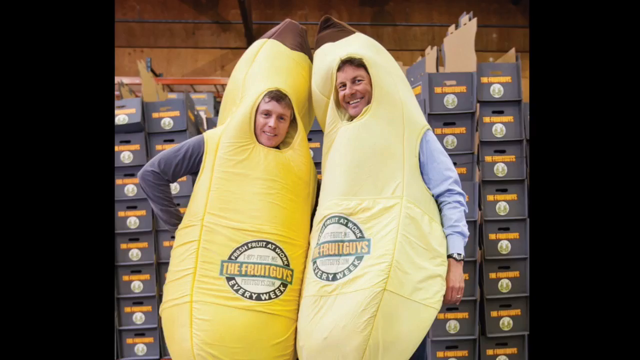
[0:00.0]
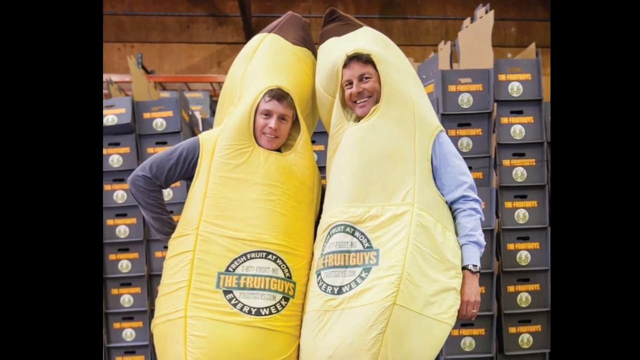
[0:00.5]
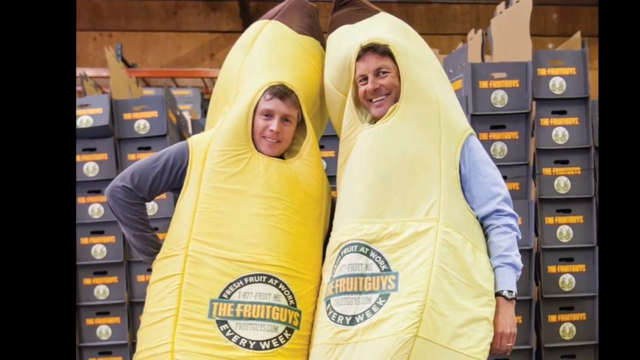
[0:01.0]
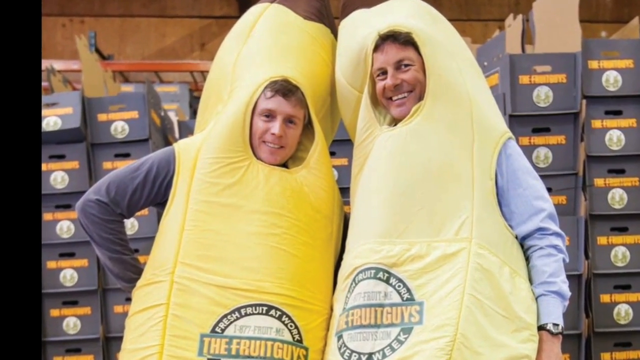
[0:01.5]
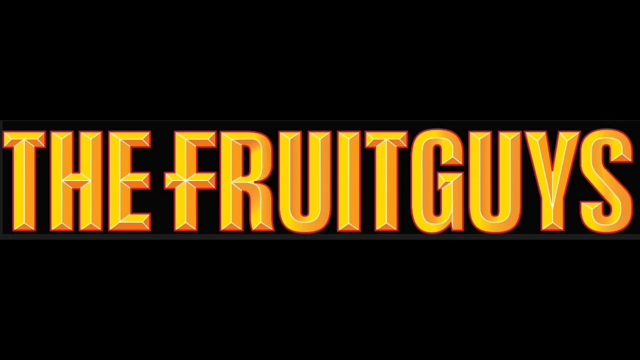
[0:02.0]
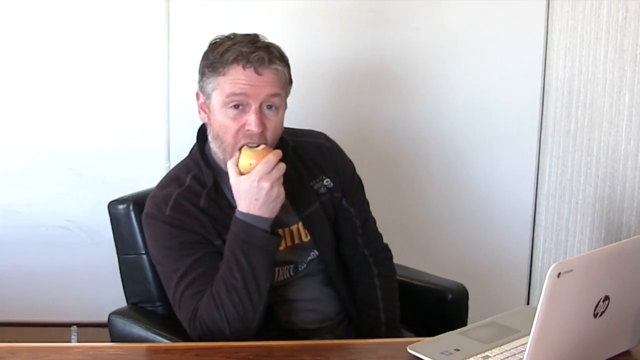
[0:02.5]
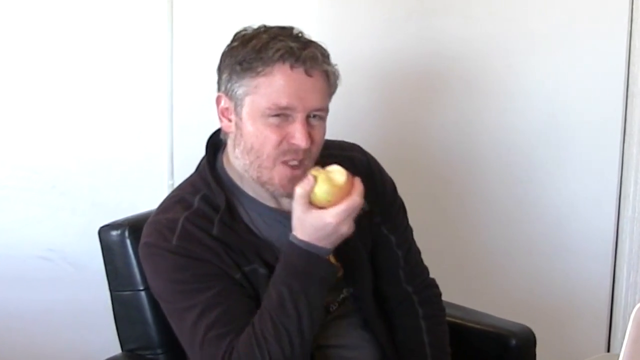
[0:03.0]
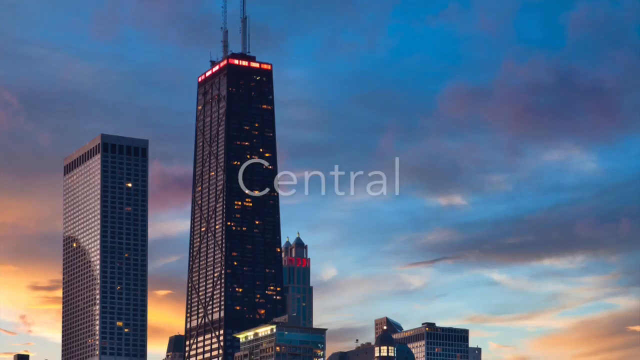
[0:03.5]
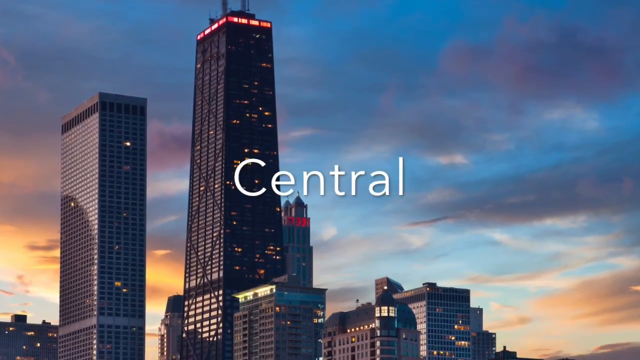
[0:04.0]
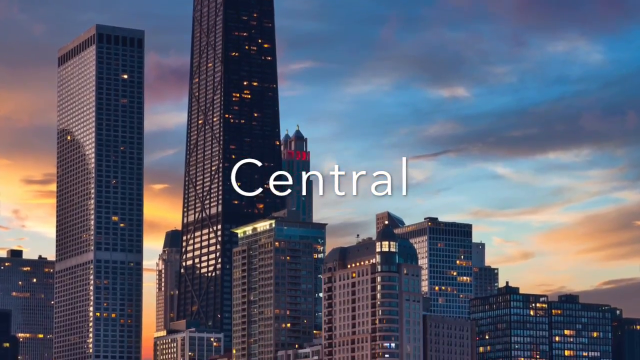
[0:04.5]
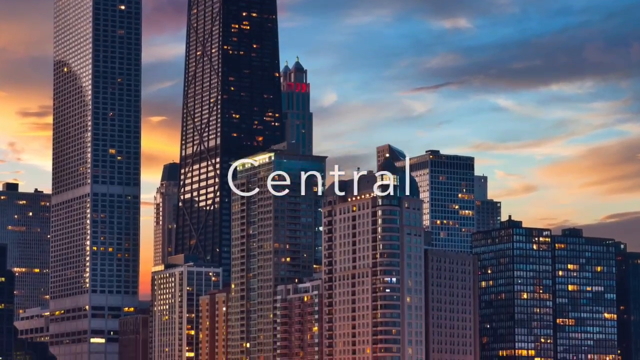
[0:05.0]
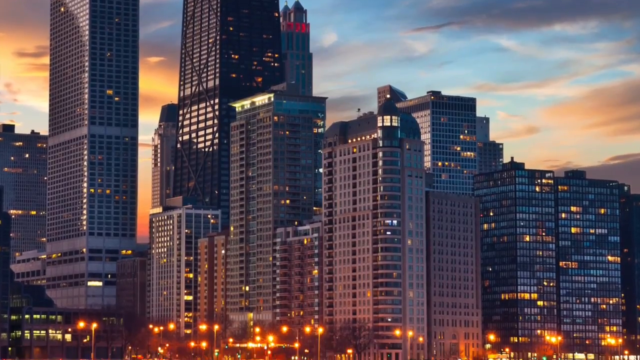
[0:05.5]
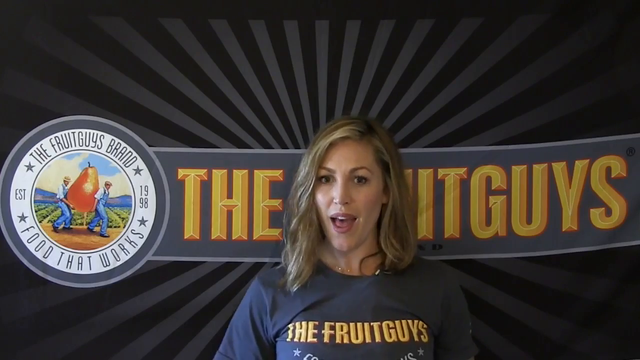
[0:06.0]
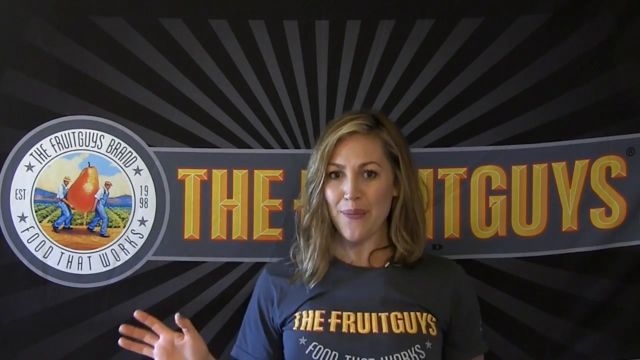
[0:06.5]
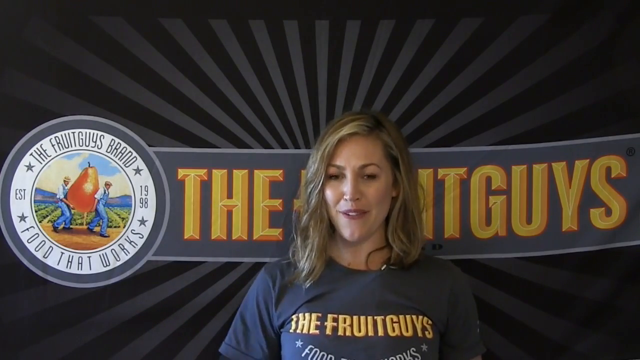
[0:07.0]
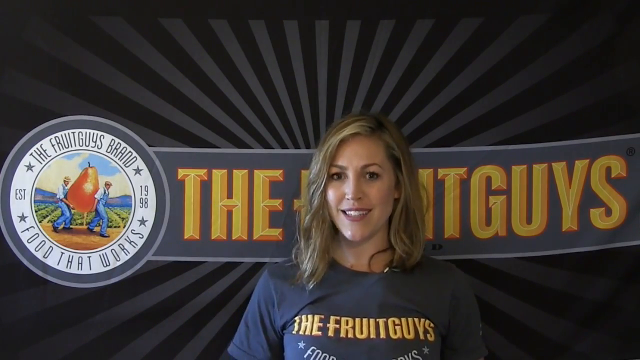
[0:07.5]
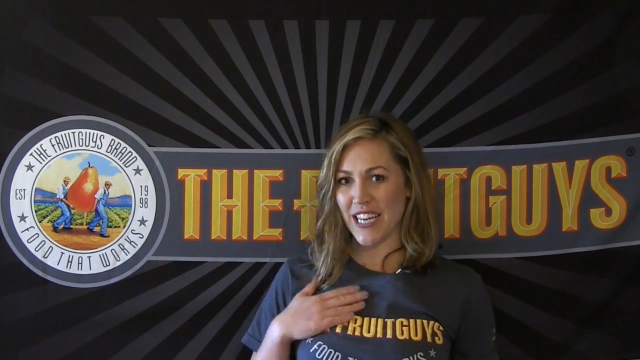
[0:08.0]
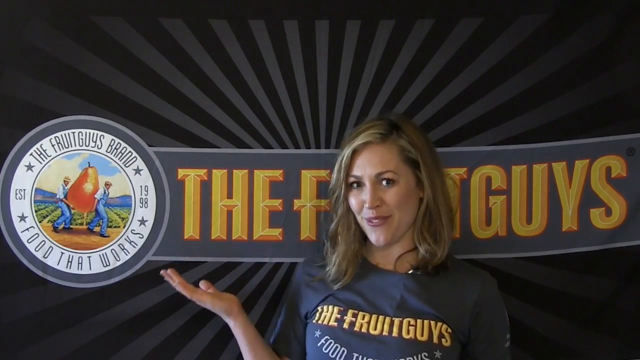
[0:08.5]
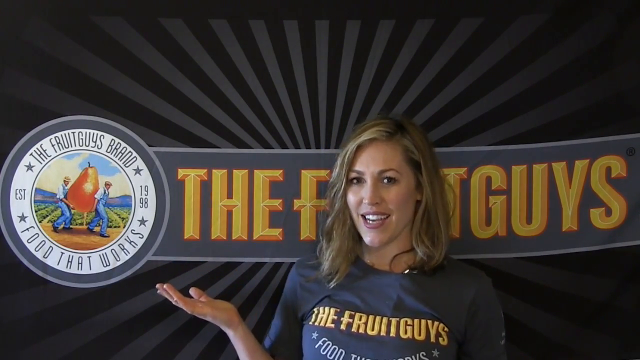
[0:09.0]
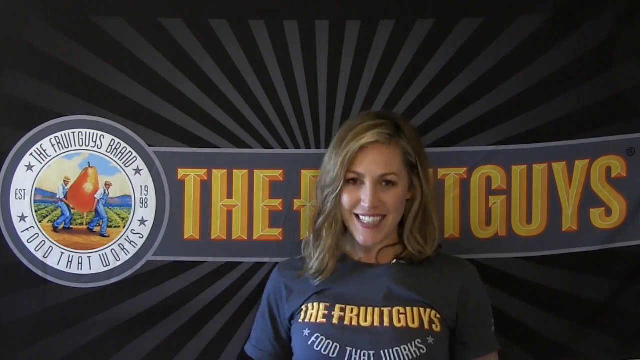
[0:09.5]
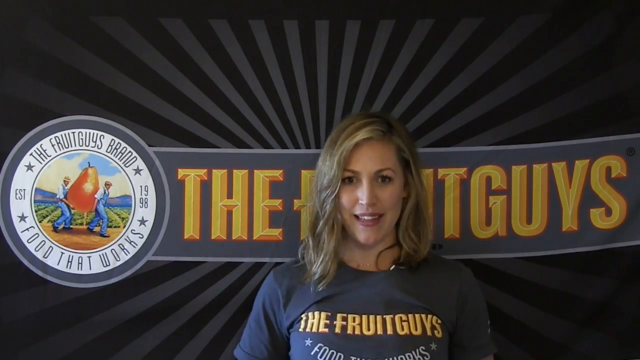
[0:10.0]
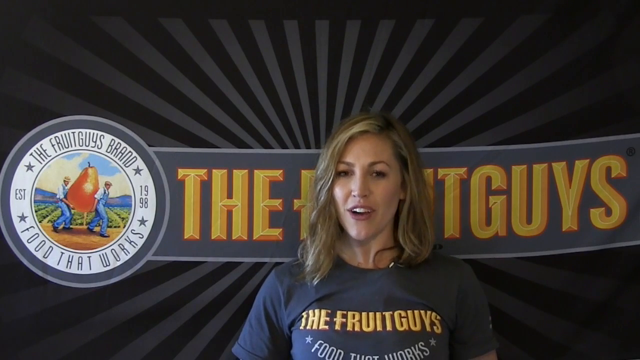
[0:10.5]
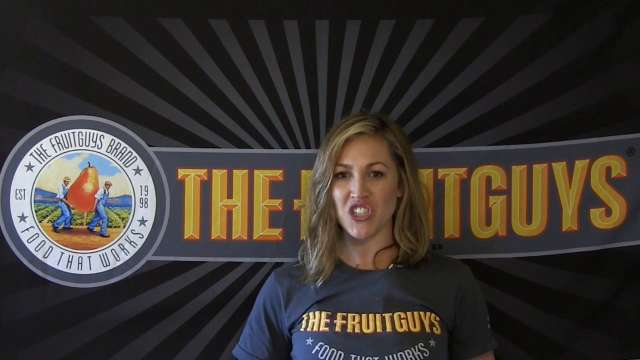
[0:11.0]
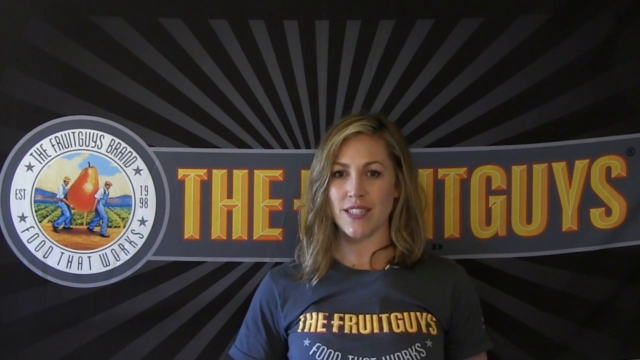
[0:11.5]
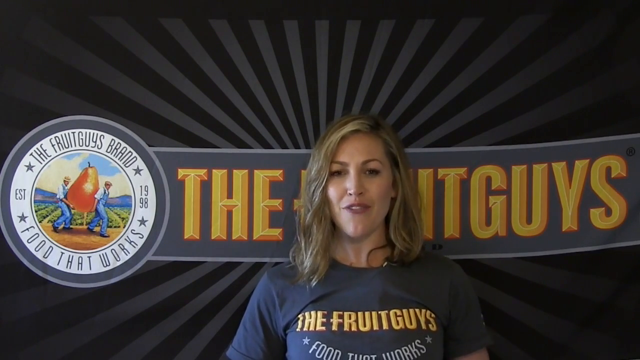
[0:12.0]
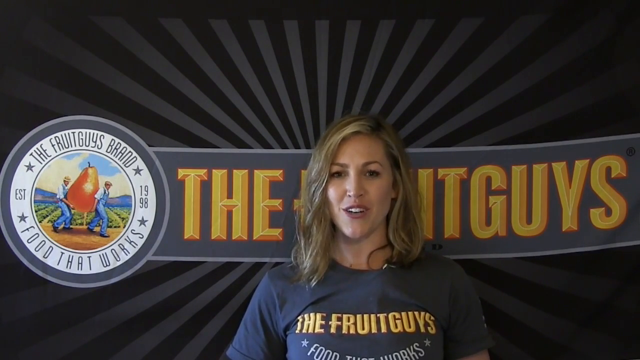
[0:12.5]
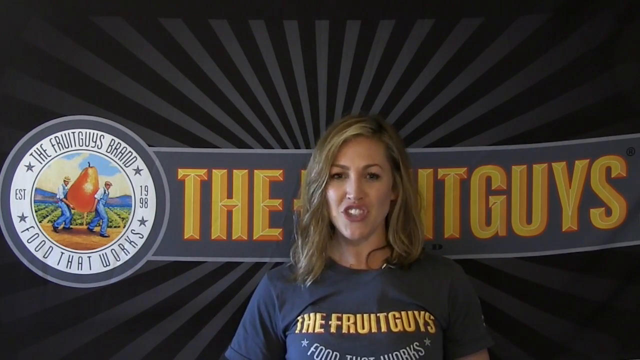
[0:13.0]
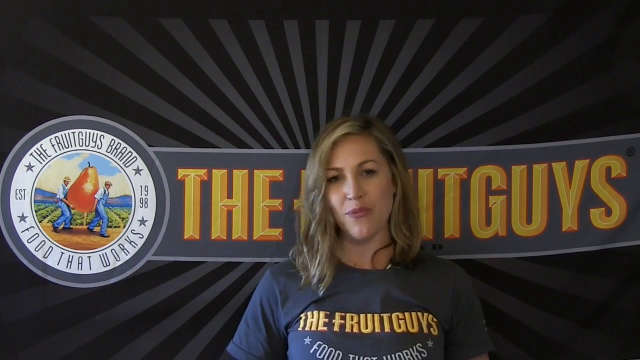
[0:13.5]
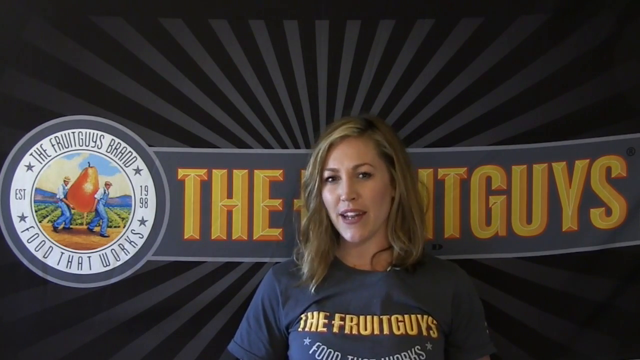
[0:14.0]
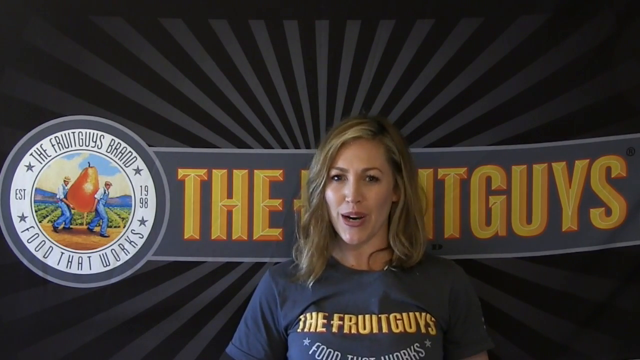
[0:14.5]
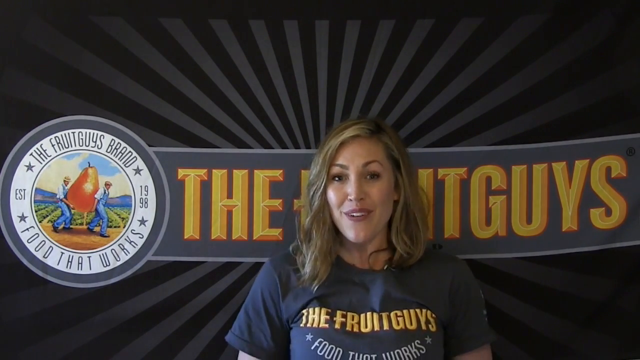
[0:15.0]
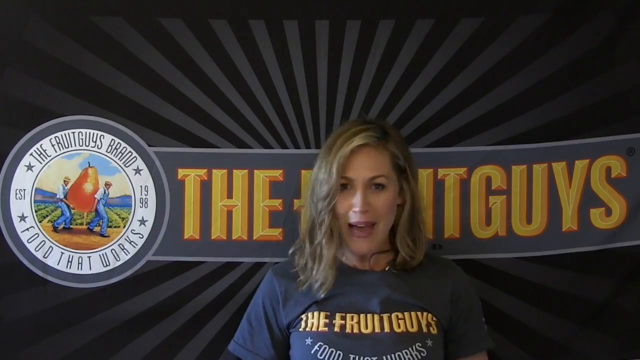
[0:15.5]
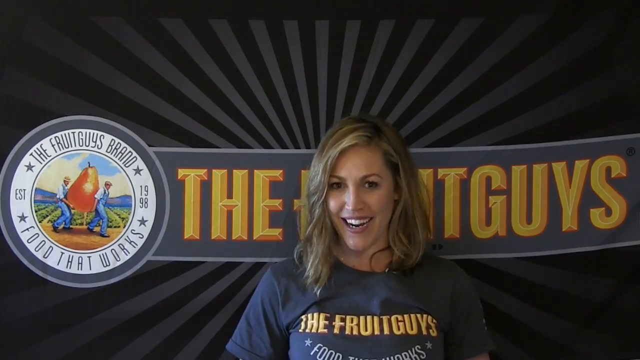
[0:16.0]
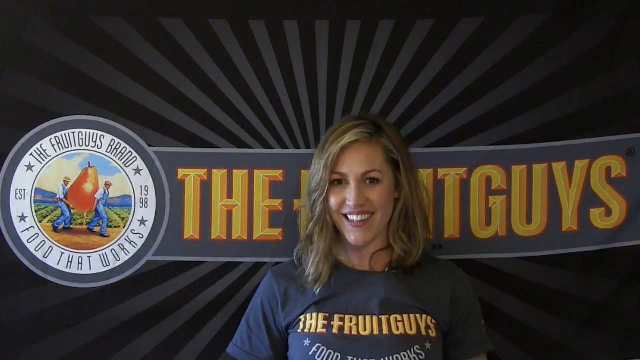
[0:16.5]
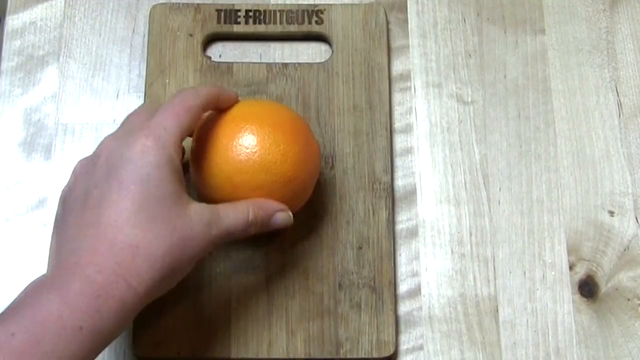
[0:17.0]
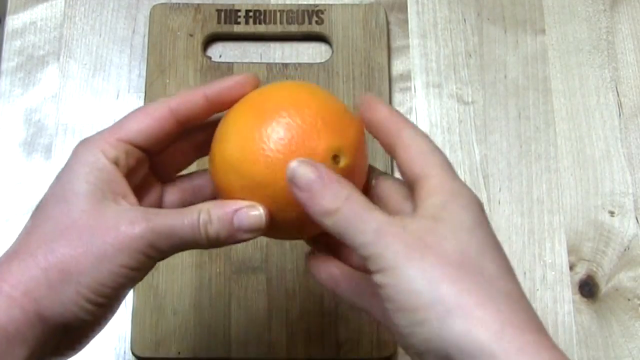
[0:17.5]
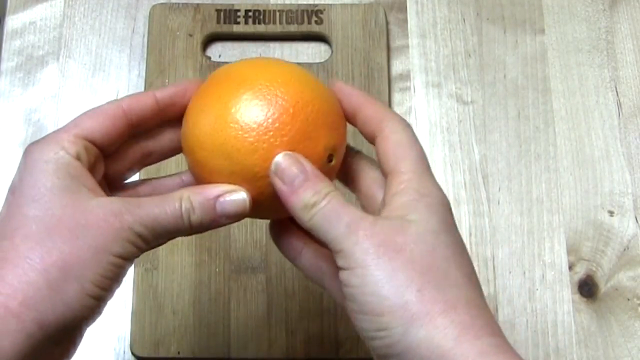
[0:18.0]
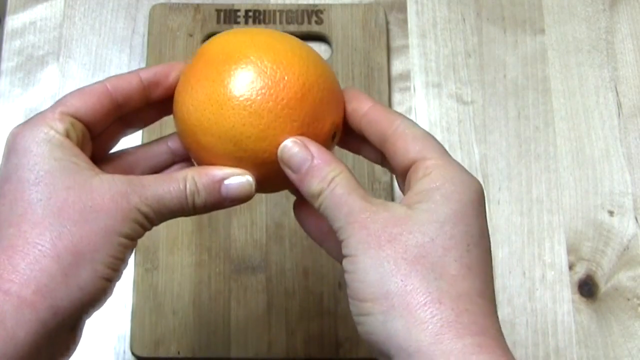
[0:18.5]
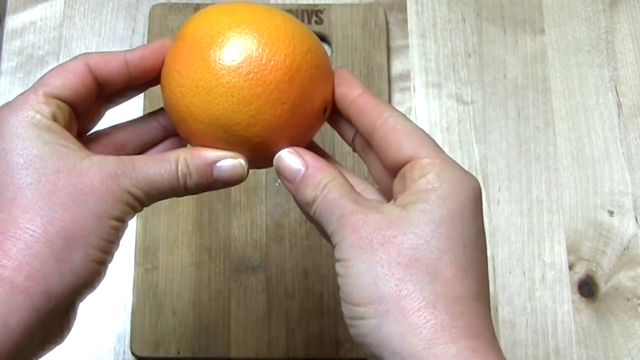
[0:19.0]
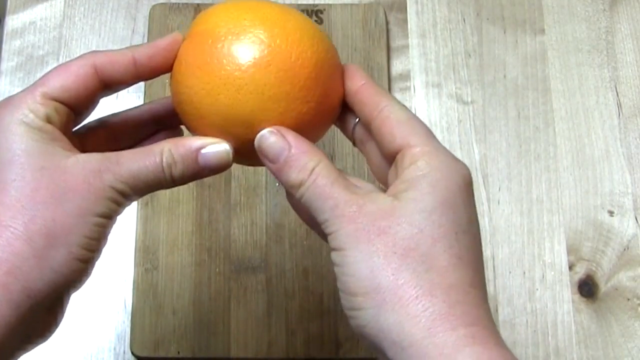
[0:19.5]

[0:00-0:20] Two men are dressed in banana costumes: the tip at the head is brown, like the nub on a banana, and the whole abdomen area is yellow. Both costumes carry an advertisement that says "the fruit guys" and "Fresh fruit at work Every week." The costume on the left is a slightly deeper yellow than the one on the right, which is a pale banana color. Behind them on a shelf are boxes, possibly holding fruit. The video cuts to the words "the fruit guys" in yellowish-orange capital letters, then shows a man eating an apple, then a city with the word "central." A woman with long, slightly wavy blondish-brown hair appears to be saying hi while standing in front of a sign that says "the fruit guys." On the left side the text reads "the fruit guys food that works" and "established 1998," with the 19 at the top and the 98 right below it.